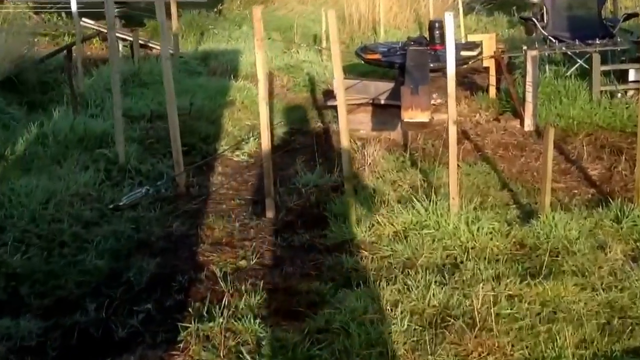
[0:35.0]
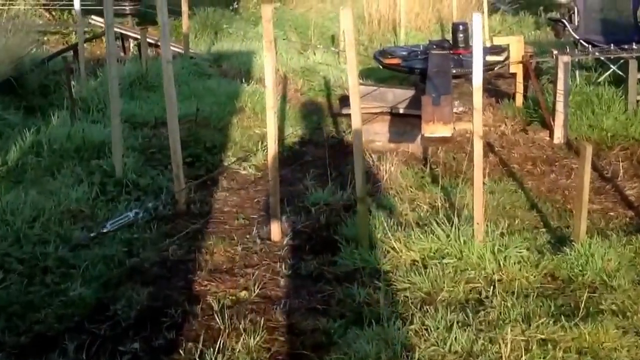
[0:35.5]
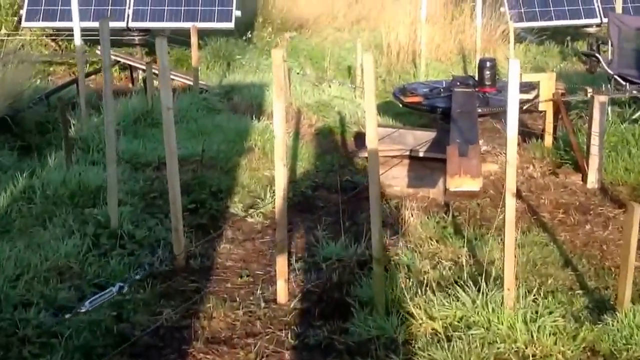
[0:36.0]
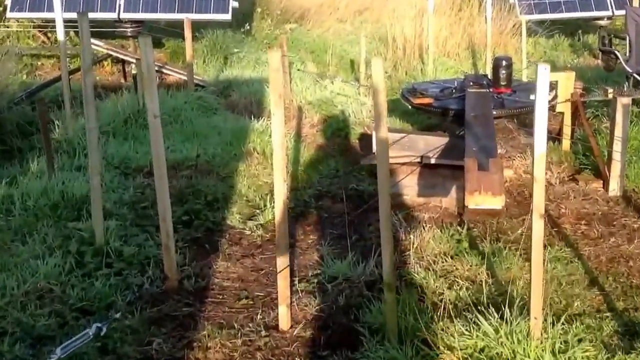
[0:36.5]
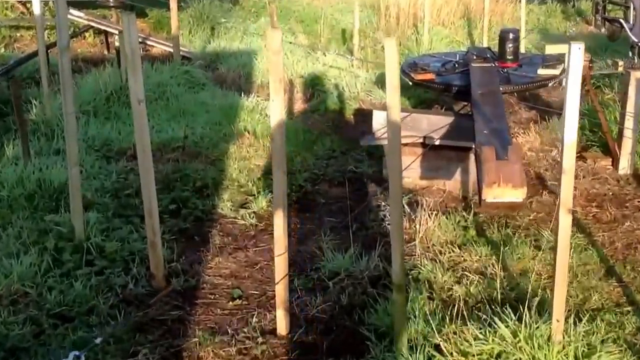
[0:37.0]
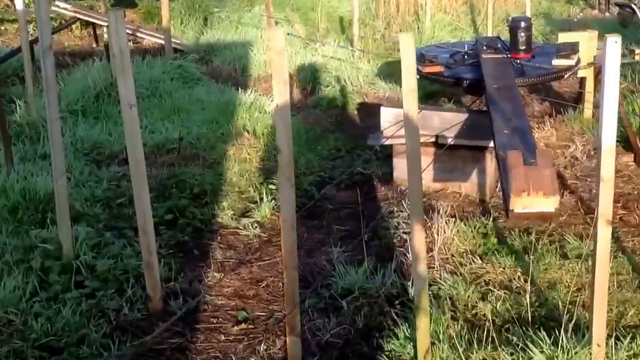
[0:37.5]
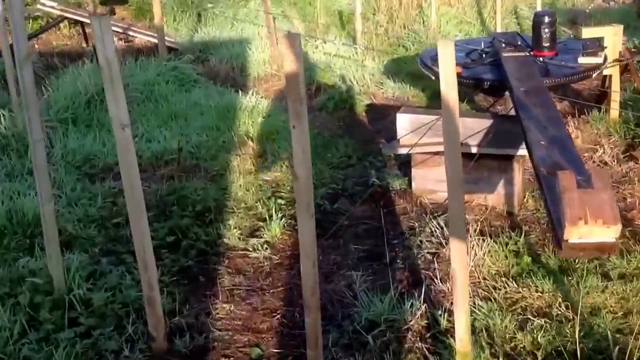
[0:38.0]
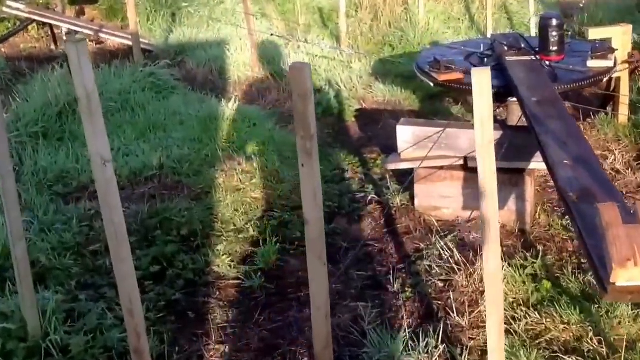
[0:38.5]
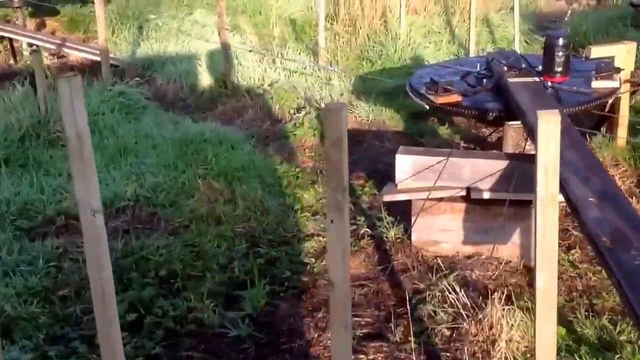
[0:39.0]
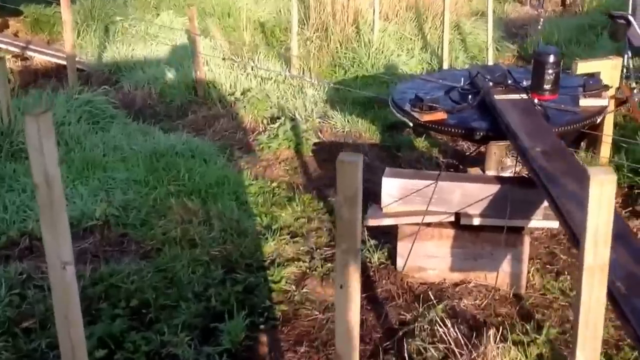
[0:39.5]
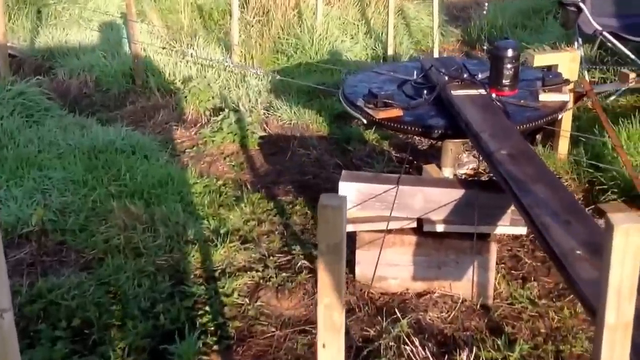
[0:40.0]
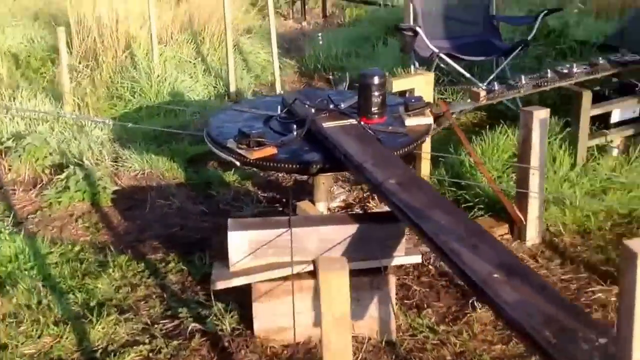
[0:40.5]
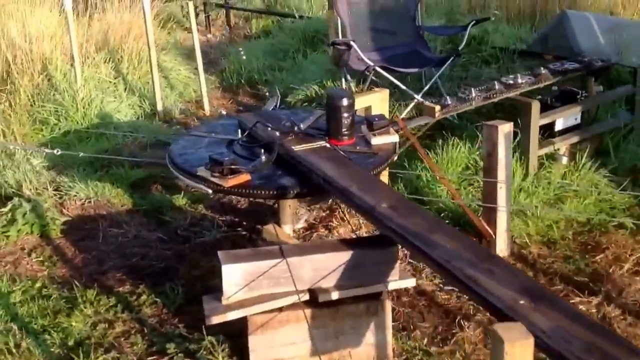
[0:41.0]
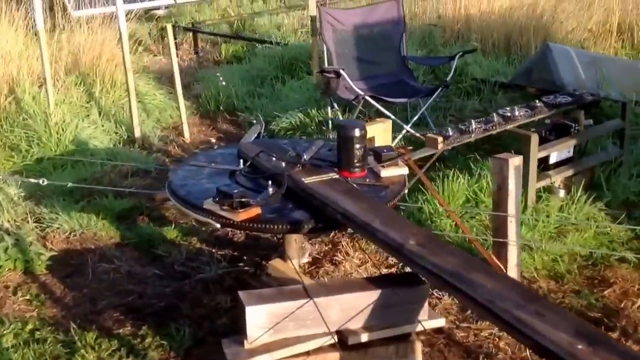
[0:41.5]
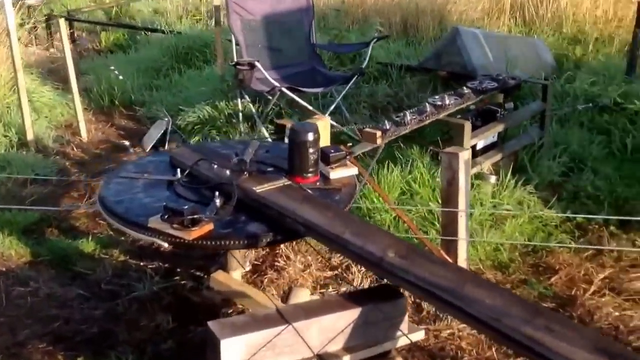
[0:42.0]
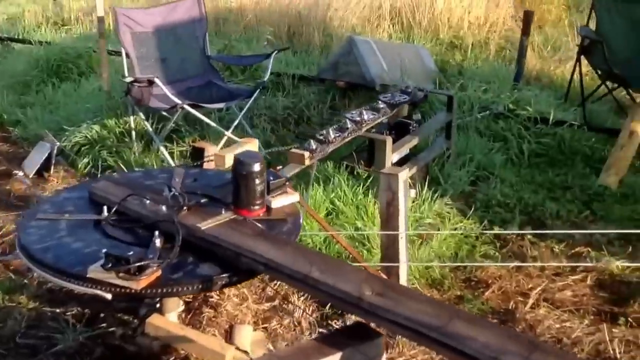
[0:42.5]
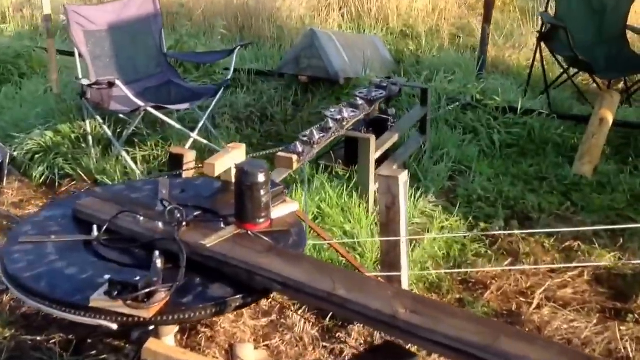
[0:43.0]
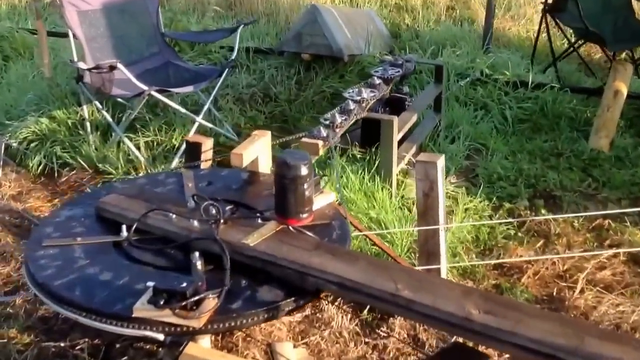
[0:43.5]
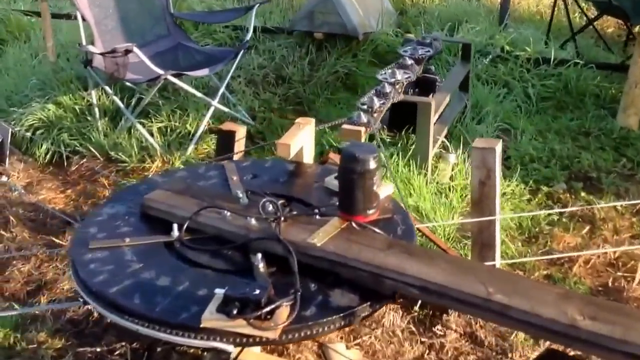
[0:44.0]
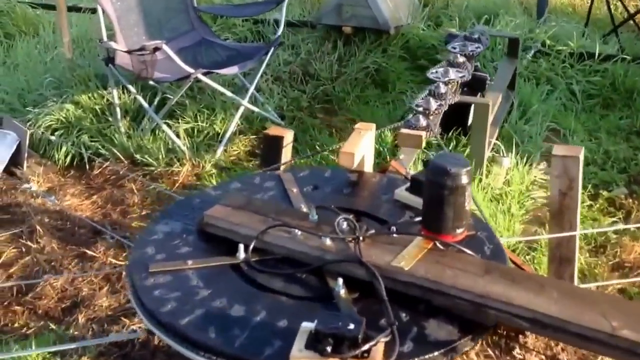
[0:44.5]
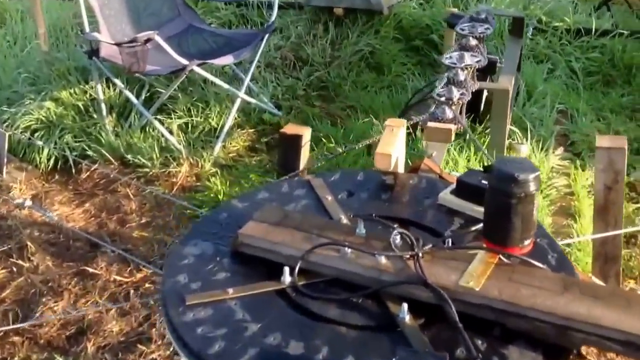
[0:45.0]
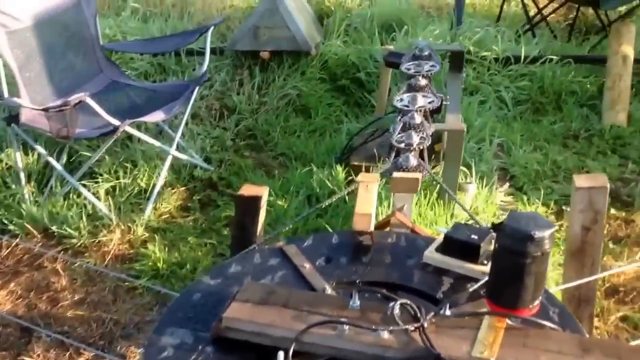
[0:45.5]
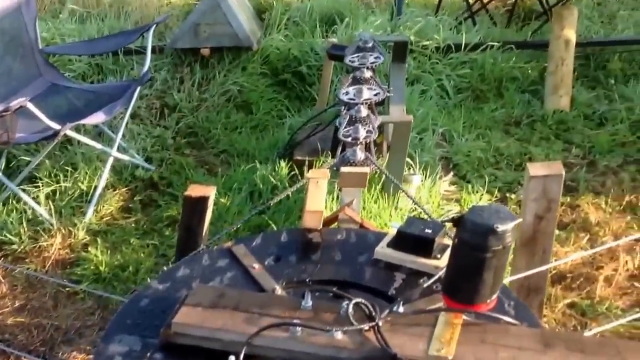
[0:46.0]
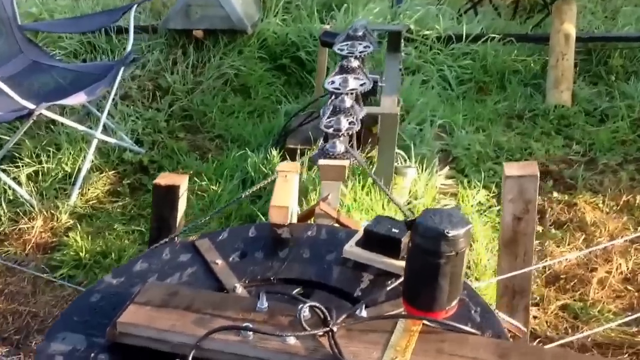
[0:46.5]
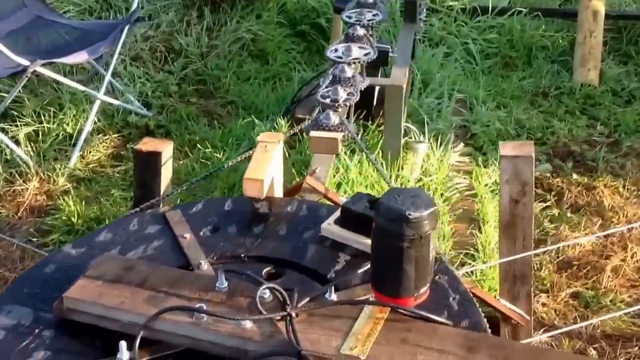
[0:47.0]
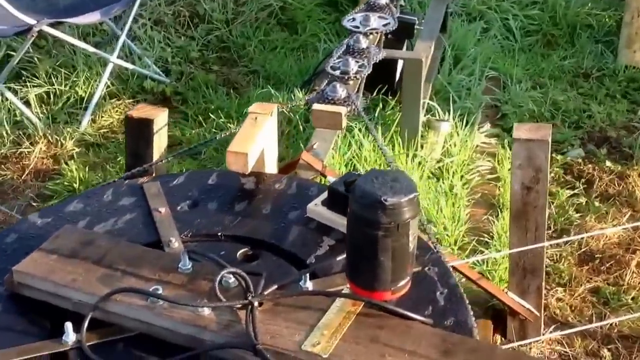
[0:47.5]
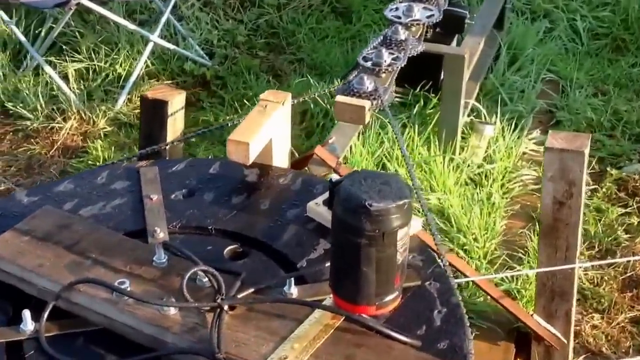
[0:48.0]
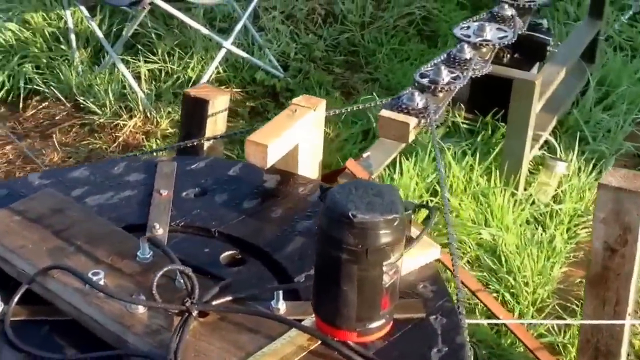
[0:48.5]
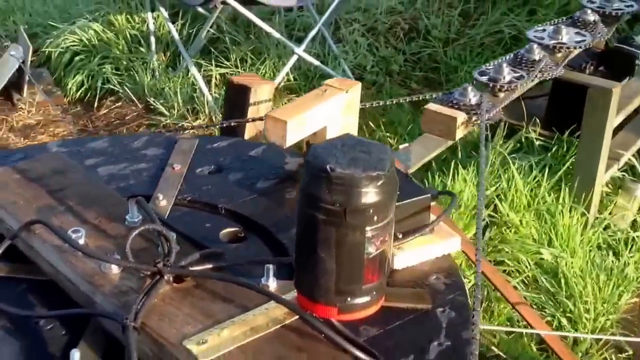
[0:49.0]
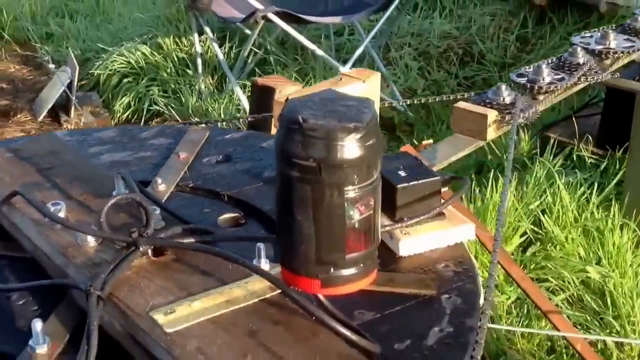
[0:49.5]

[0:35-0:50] The shadow of a man is cast on the ground, showing the shape of his head and his hands. The hands in the shadow are holding up the smartphone he is using to record the solar panels. The shadow falls across the green grass on the ground. Six wooden stakes are driven into the ground. Text in the top left corner of the screen reads "solar tracker, four kilowatt array, home made". The camera pans closer to focus on a circular, disc-like piece of equipment with a metal handle attached to it, and several other metal handles attached to other equipment holding it securely in place. Cables run along and through the disc. A folded foldable chair with light grey fabric is also visible.